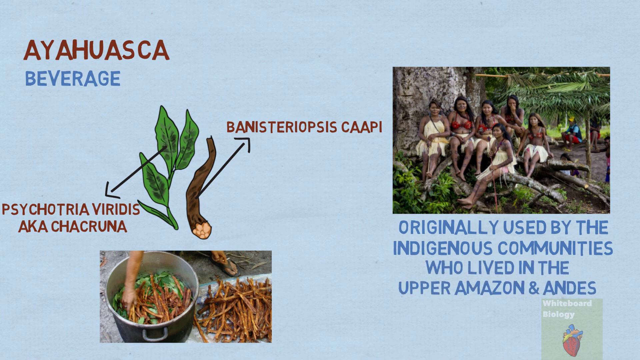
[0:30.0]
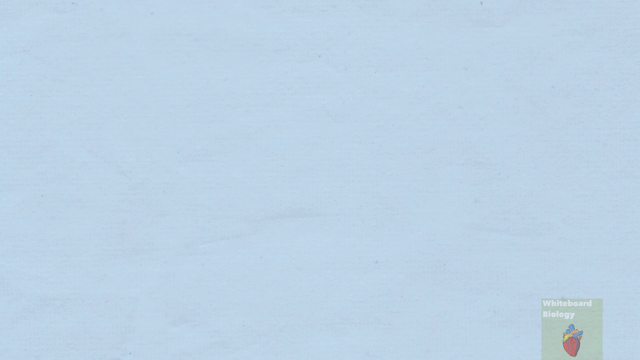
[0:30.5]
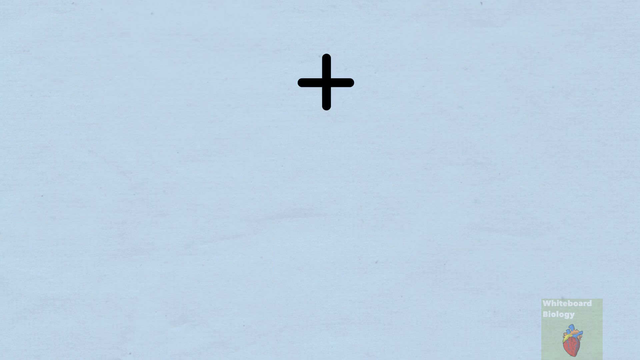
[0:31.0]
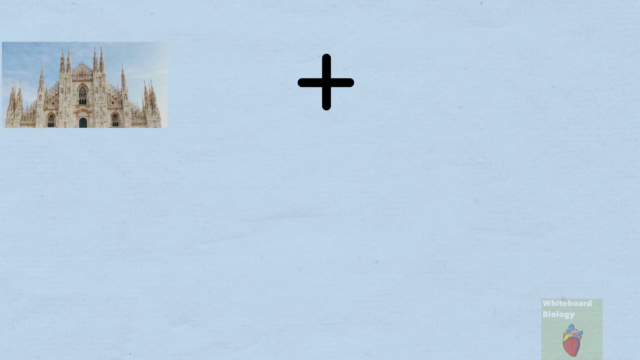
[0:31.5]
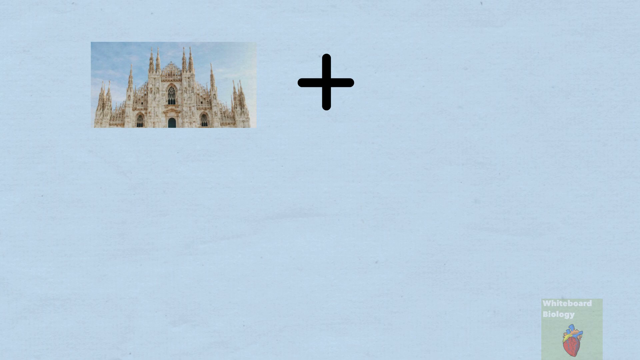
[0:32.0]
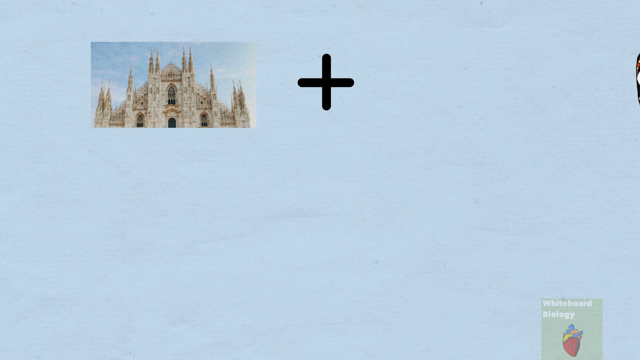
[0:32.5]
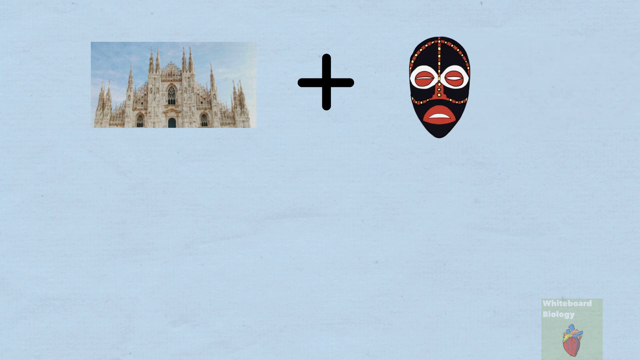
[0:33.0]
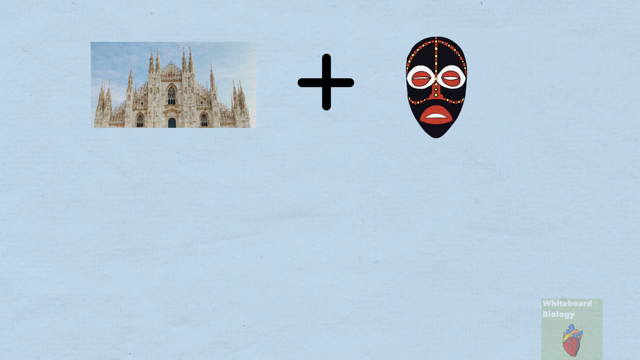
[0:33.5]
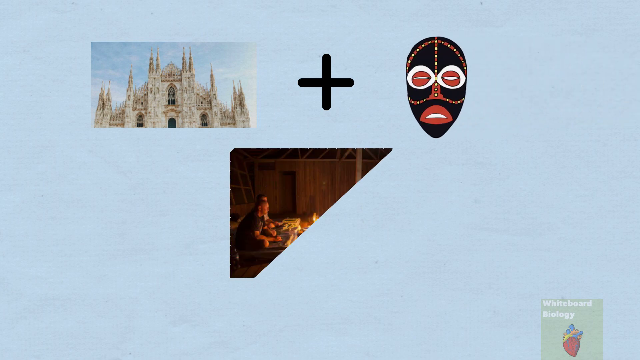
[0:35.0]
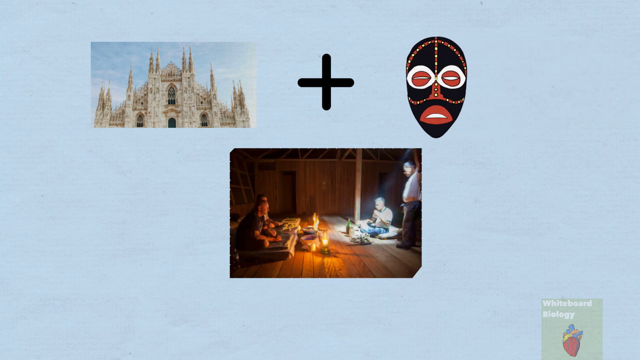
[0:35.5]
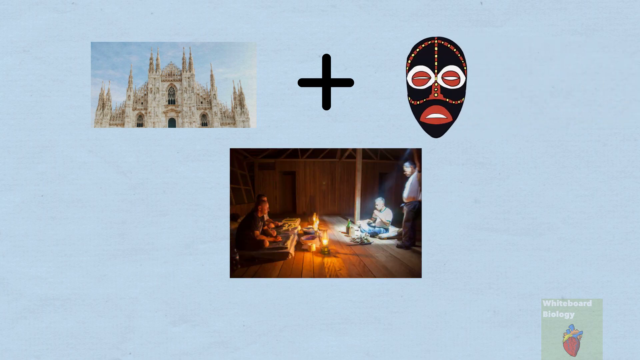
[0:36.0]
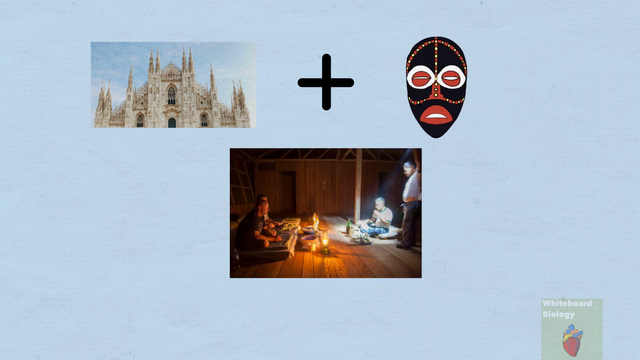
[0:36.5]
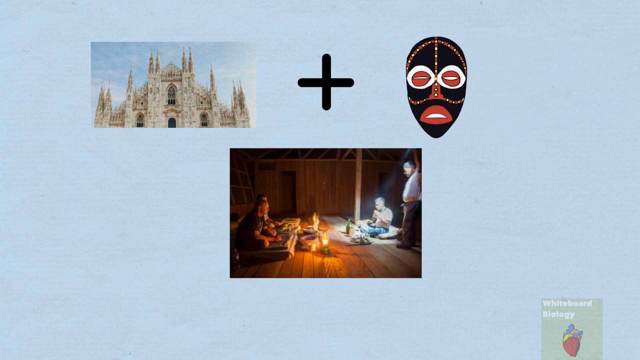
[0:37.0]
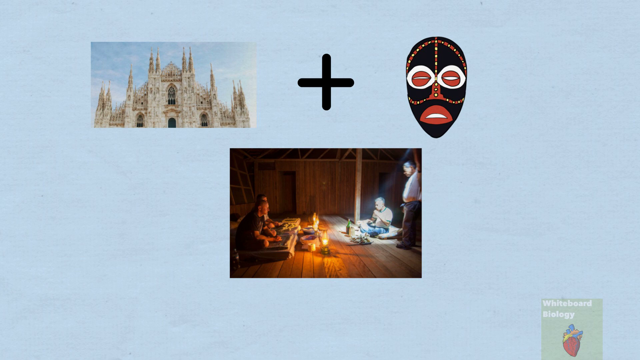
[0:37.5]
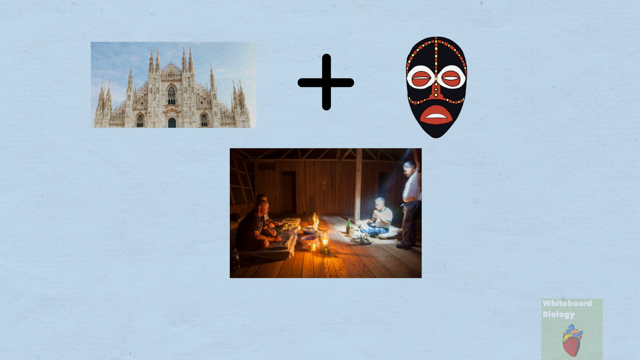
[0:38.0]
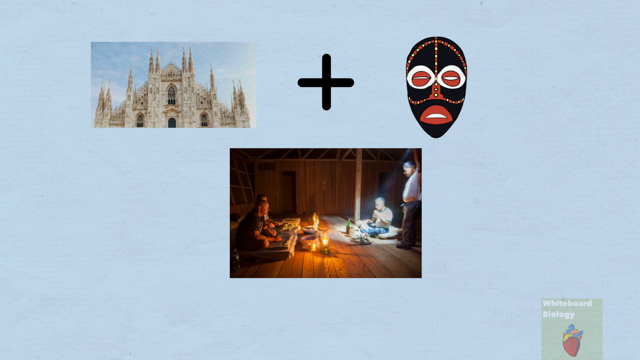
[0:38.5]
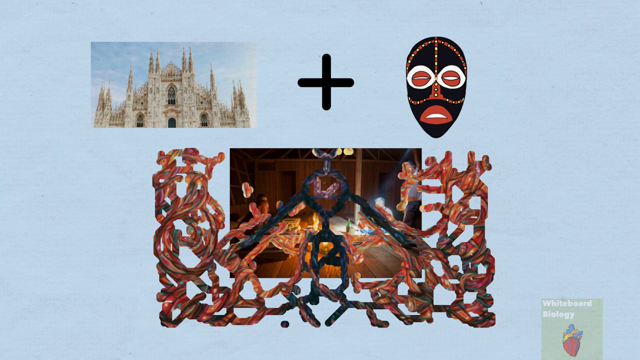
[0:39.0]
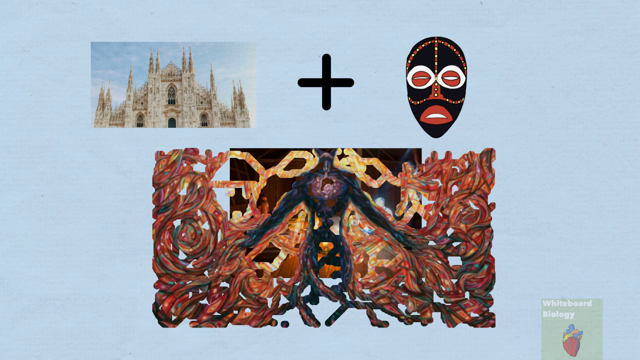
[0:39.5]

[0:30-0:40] The root and leaf that were brought together to create a substance are still shown. A building that looks like a church appears with a plus sign, and on the other side there is an image of a mask. Someone like a priest appears with light where two people were sitting. There is an image of a spiritual being in a form like a tree; it is hard to see how it looks, but a glaring light comes from its chest area and stretches out like the roots of a tree.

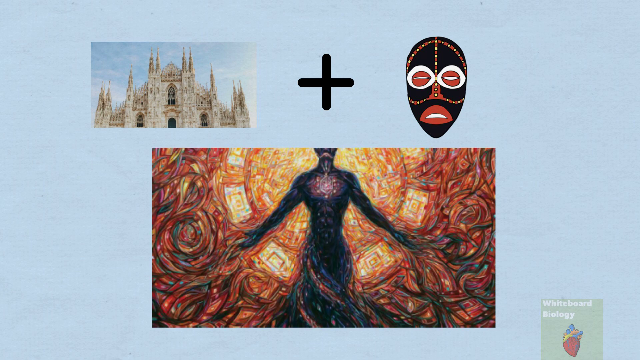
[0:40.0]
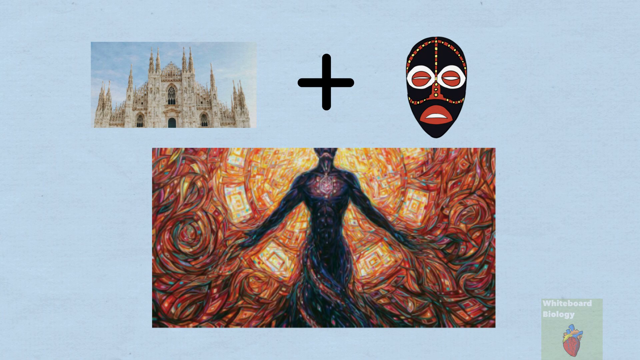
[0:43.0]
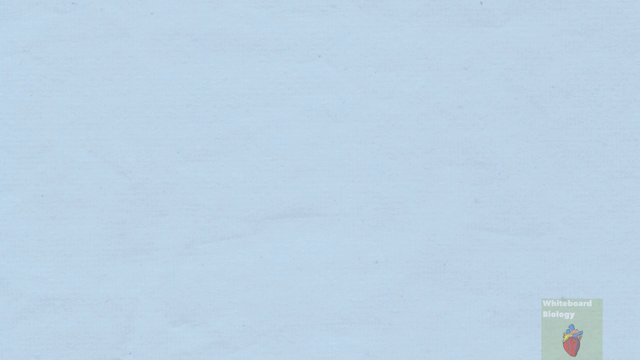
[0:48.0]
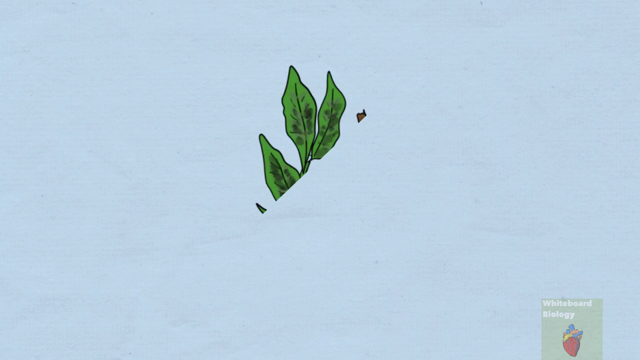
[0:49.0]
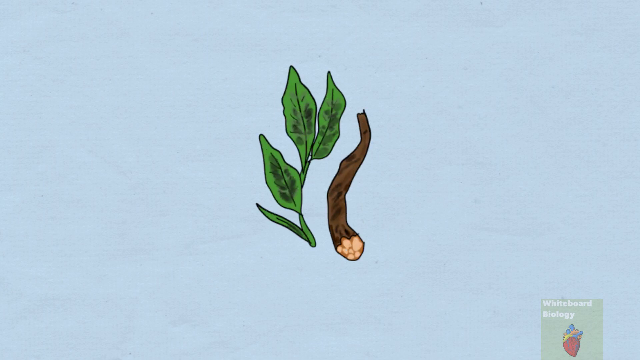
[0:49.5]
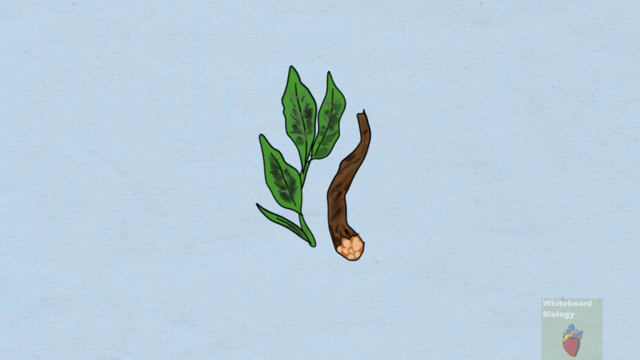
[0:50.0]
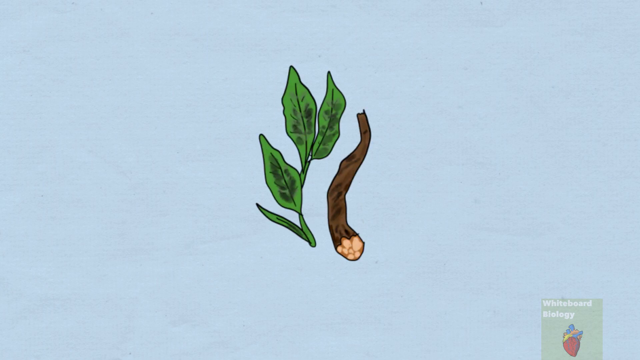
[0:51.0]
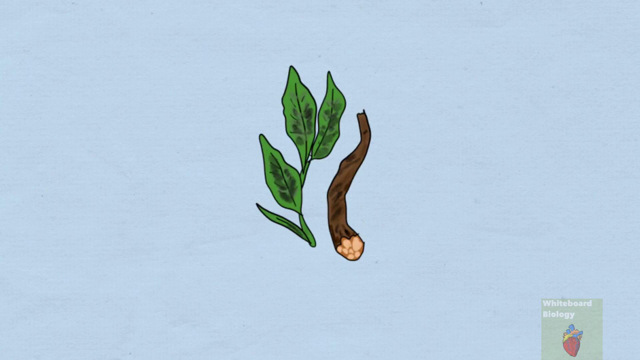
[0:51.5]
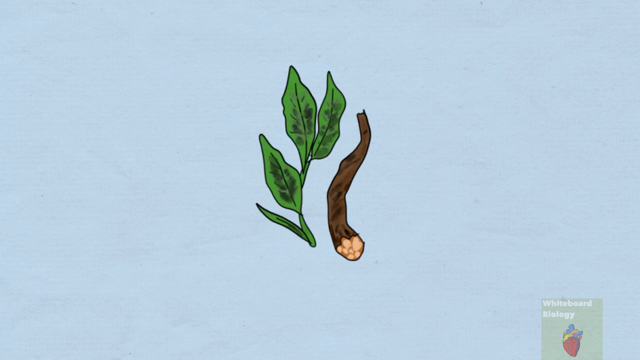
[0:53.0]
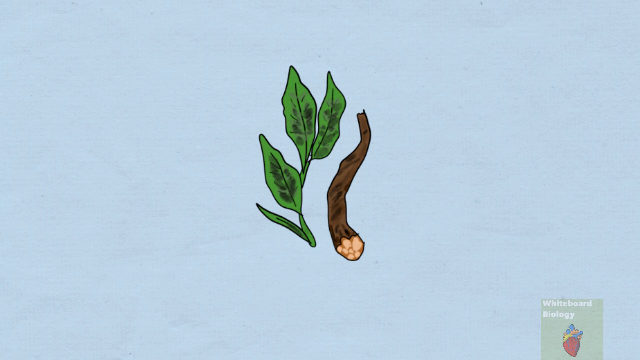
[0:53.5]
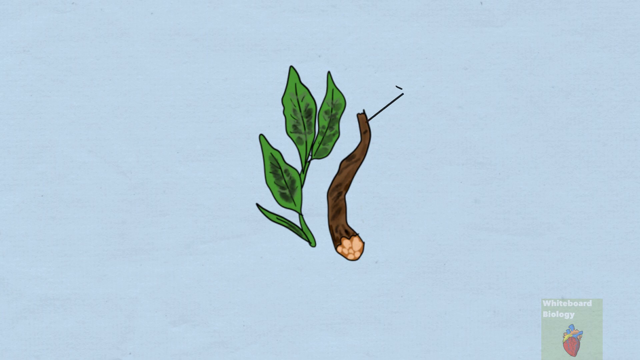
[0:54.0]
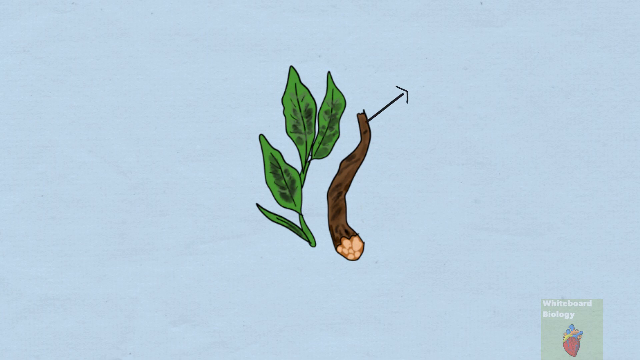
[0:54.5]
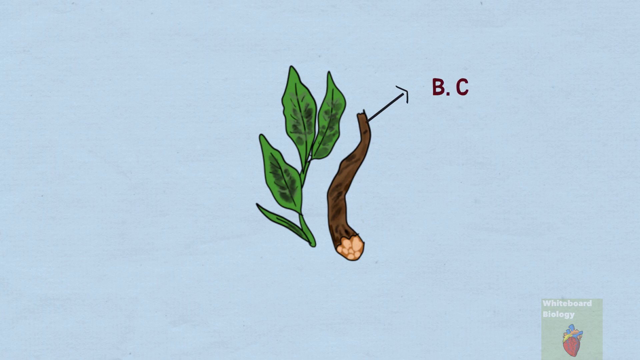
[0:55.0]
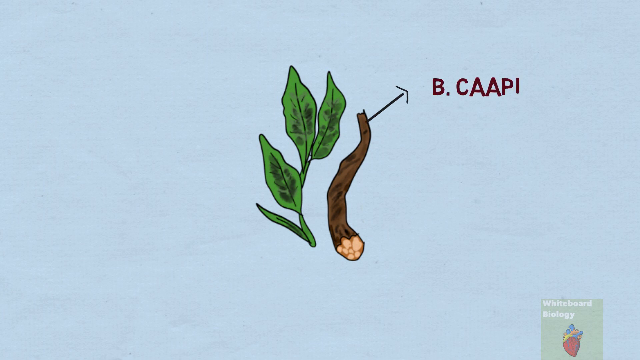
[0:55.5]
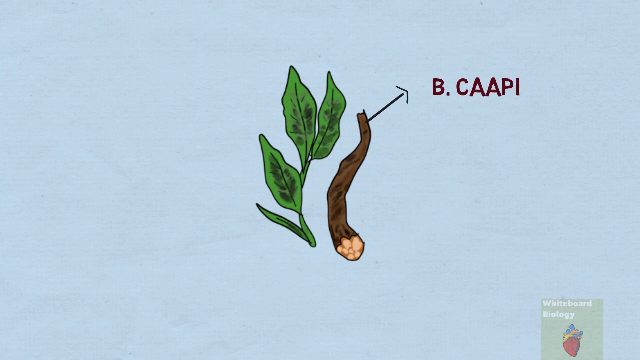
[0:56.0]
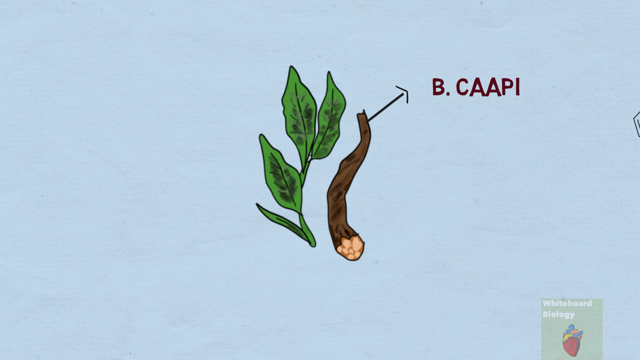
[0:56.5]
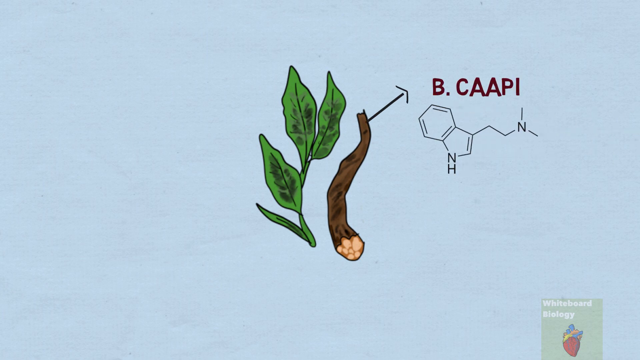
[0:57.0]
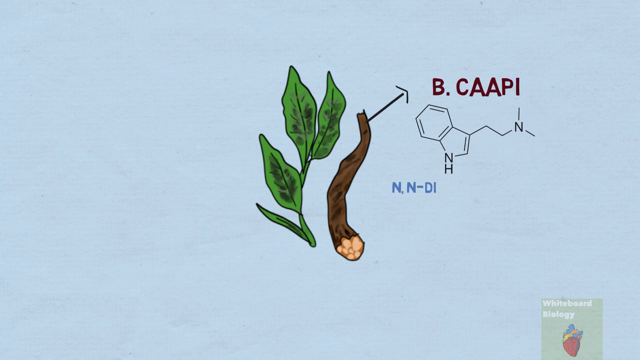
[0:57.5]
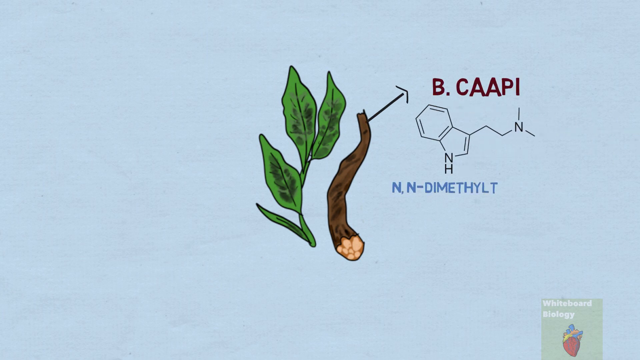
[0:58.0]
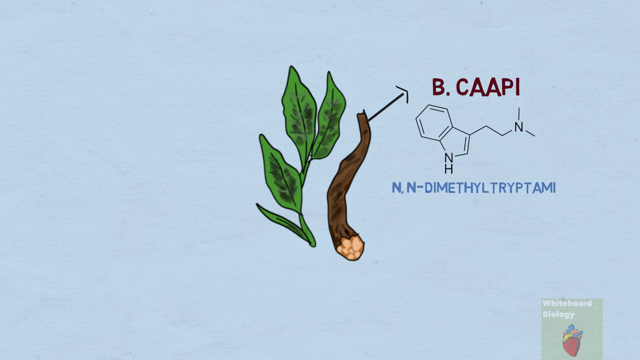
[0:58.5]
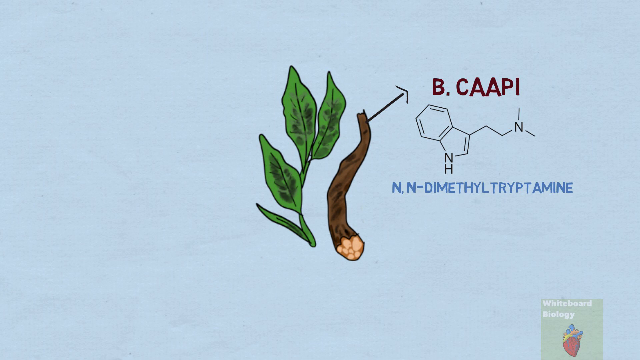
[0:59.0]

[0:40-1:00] An image of someone who looks kind of spiritual is shown. The root and leaf from earlier are still there, and a branch of it is apparently called B-Kapi.